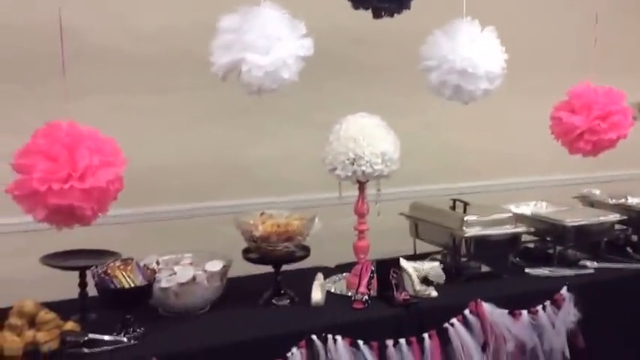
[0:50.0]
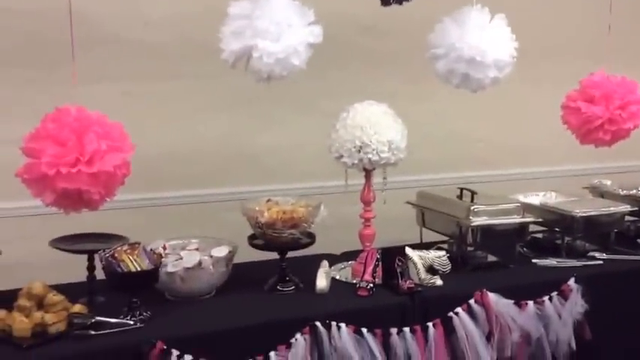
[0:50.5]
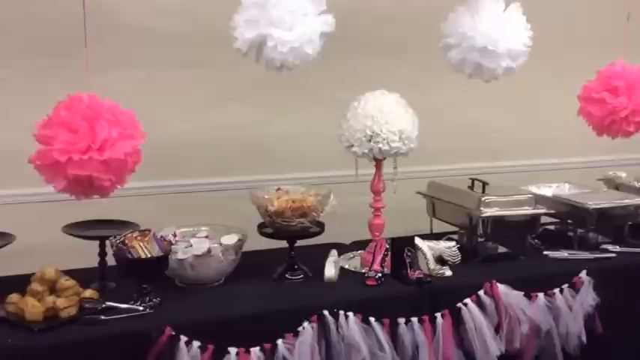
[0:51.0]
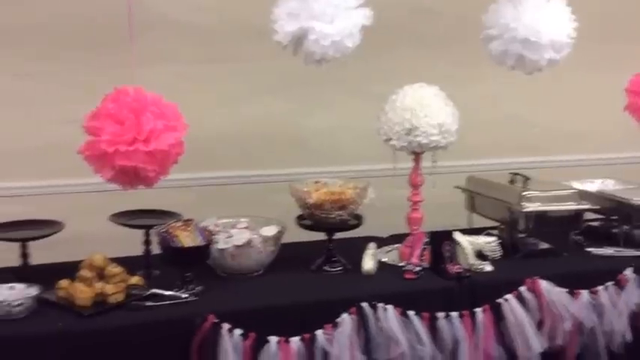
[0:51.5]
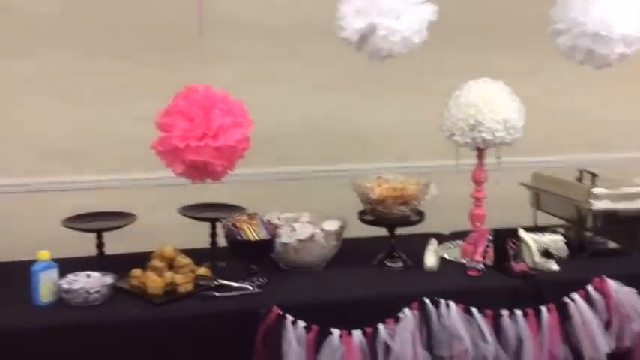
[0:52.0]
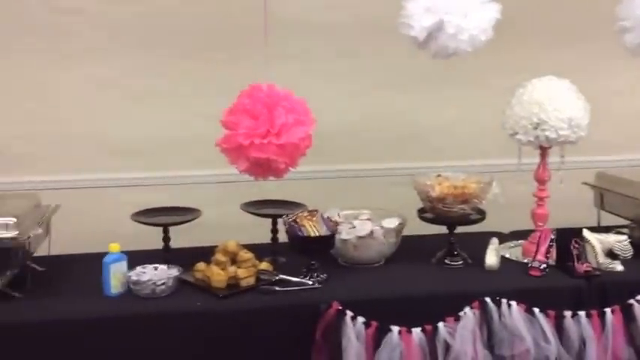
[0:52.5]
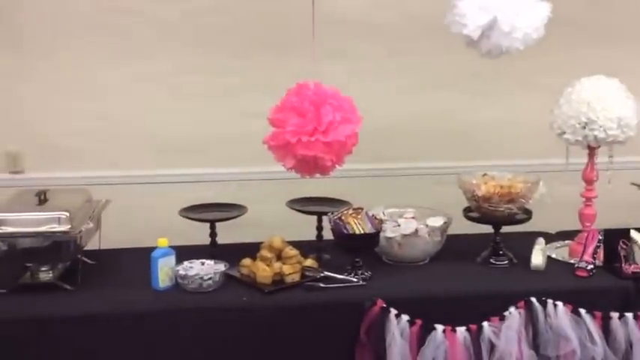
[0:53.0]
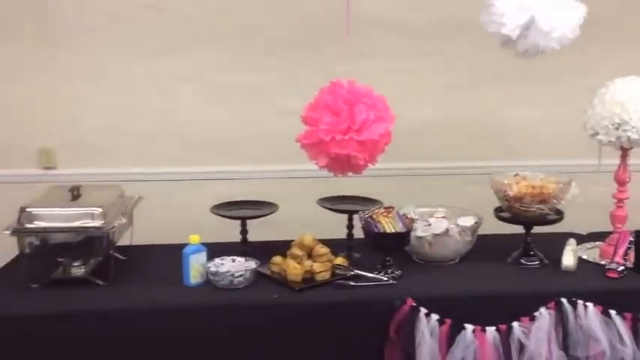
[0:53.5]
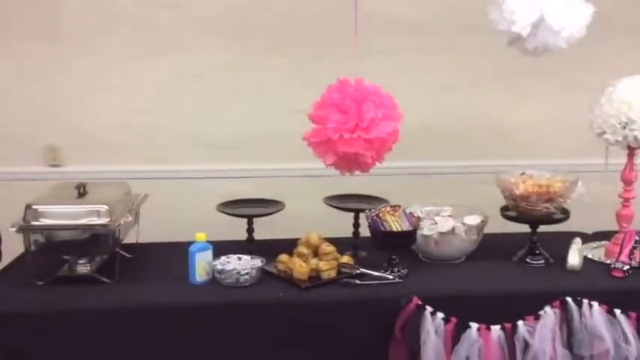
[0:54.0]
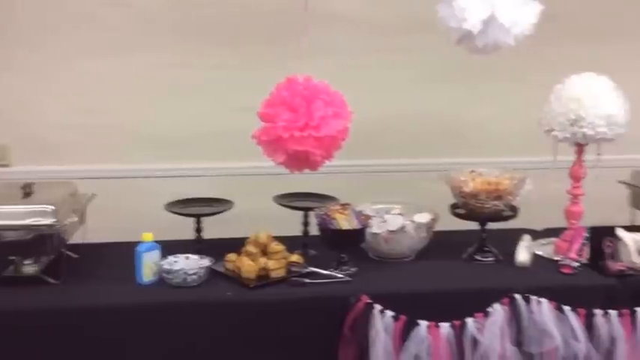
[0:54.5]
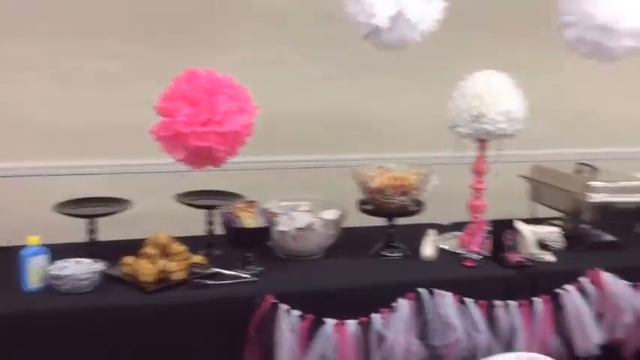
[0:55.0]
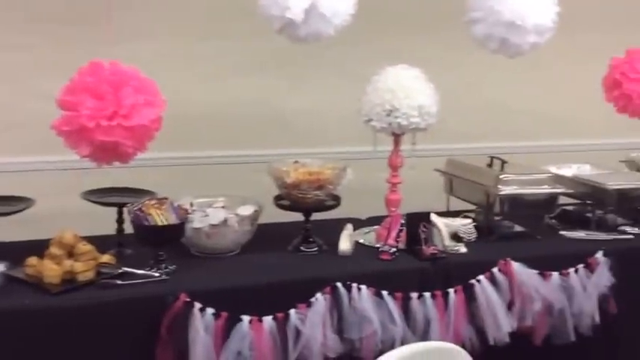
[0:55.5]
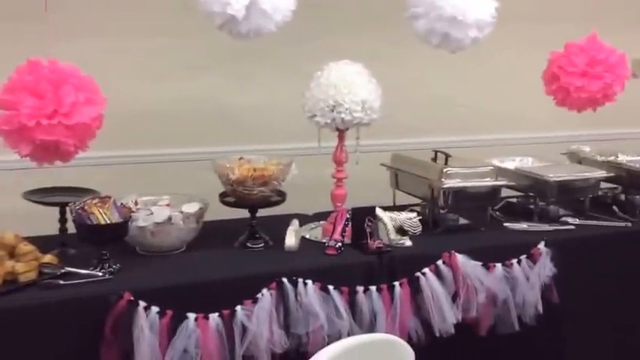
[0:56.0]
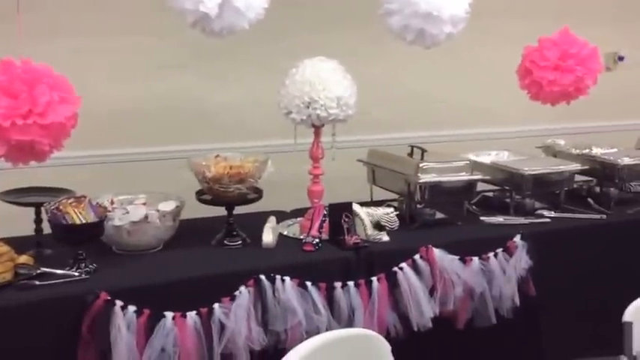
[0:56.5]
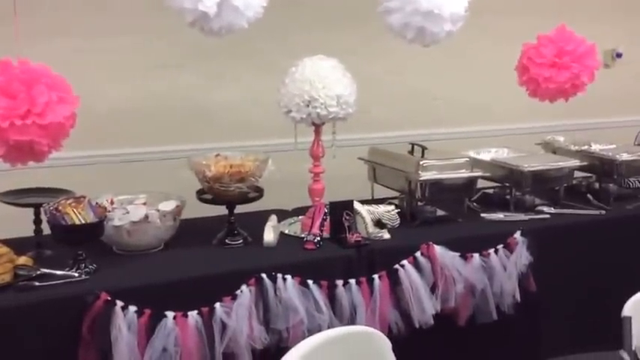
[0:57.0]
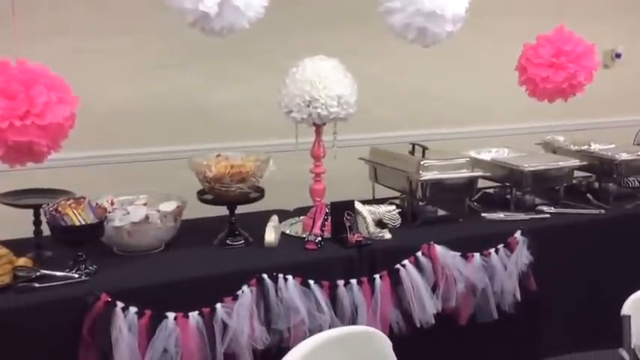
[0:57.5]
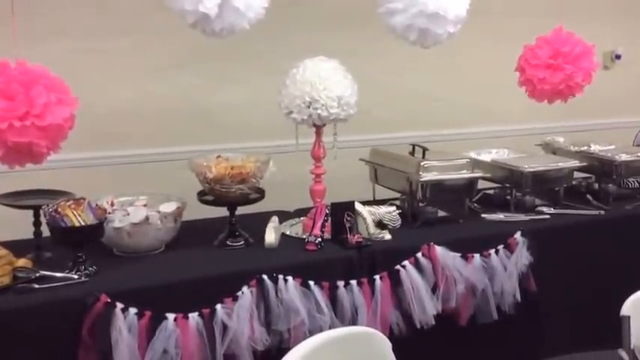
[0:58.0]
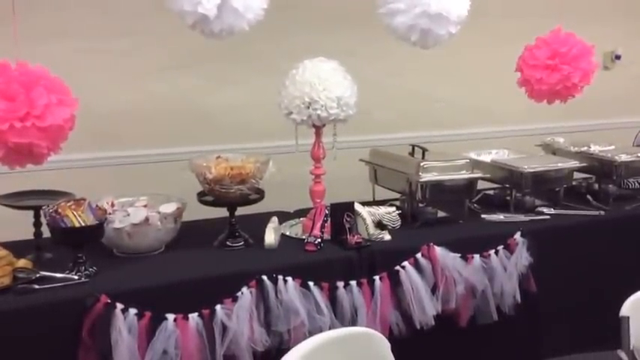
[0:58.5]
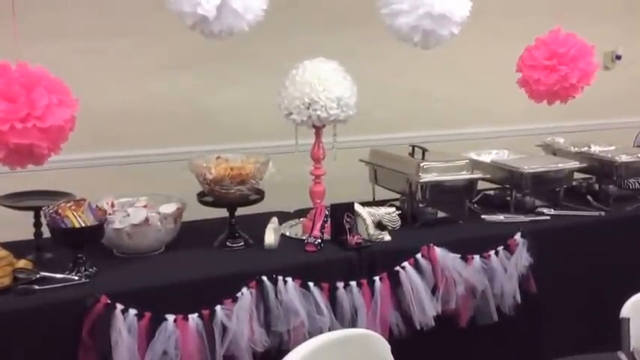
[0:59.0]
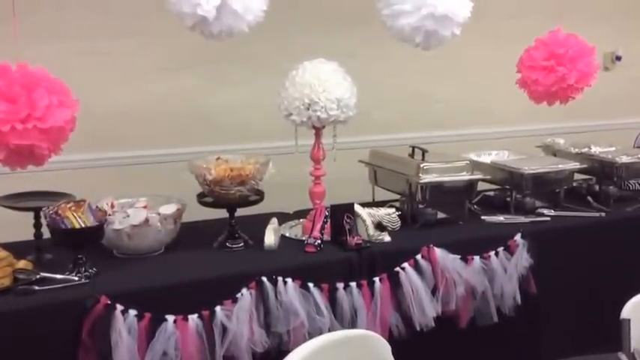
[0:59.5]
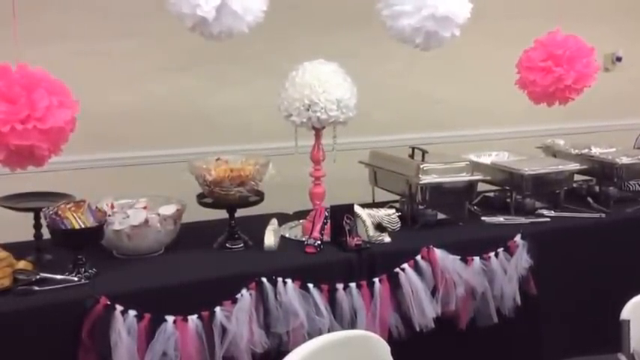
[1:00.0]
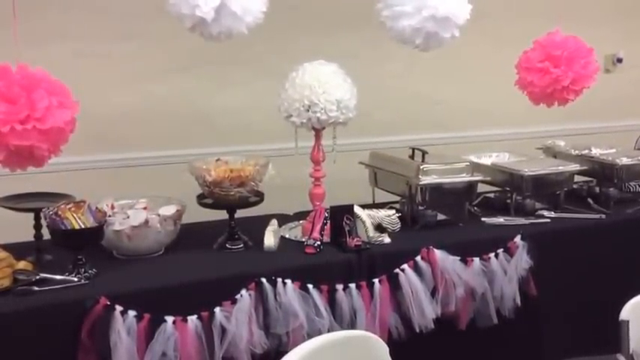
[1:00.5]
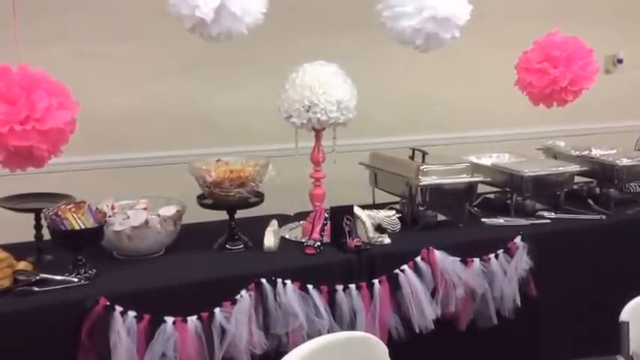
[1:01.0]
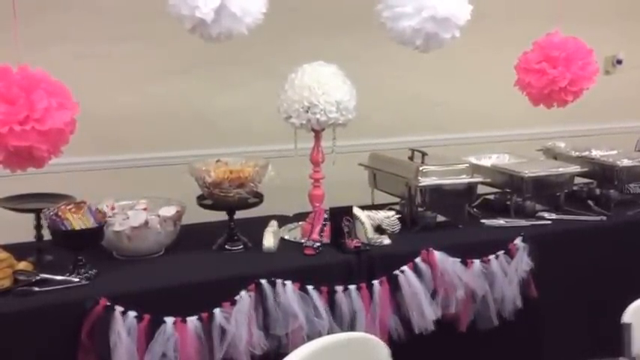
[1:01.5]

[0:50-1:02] The camera turns further left, showing the back end of the room. A very long rectangular table holds a lot of different foods and trays, including about three rectangular cooking trays with covers over them. There are a bunch of the pink and white pom-pom balls. On the left are some bowls already holding dry perishable foods. Scrolling further left, a bunch of muffins is already on the table with a little picker for picking them out without touching them directly, and some sauce packets are around as well.